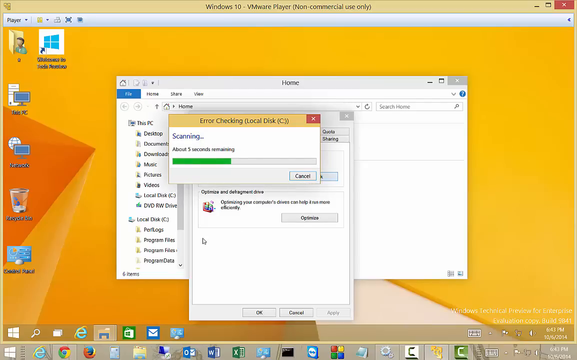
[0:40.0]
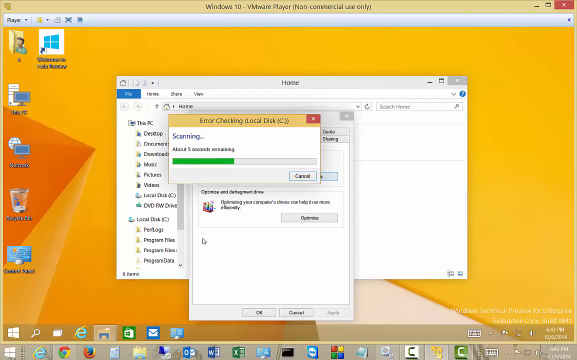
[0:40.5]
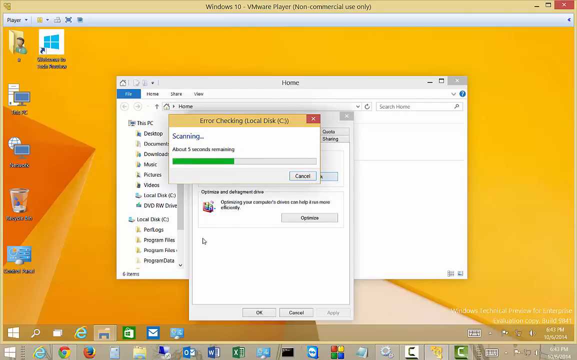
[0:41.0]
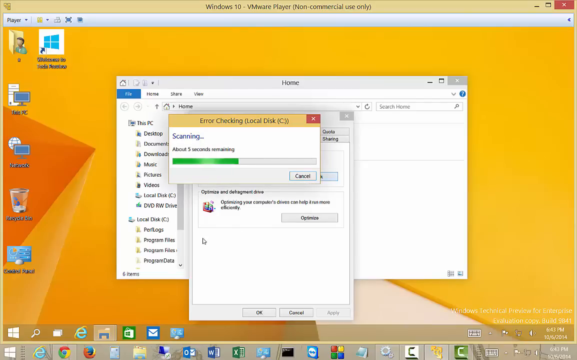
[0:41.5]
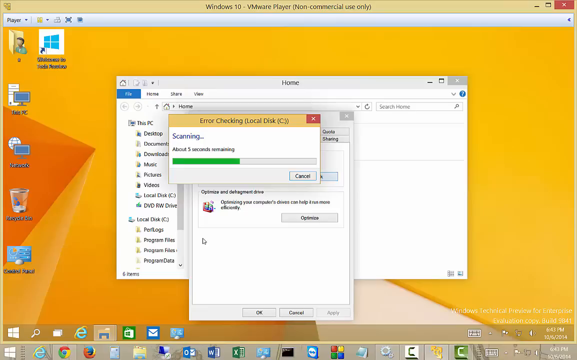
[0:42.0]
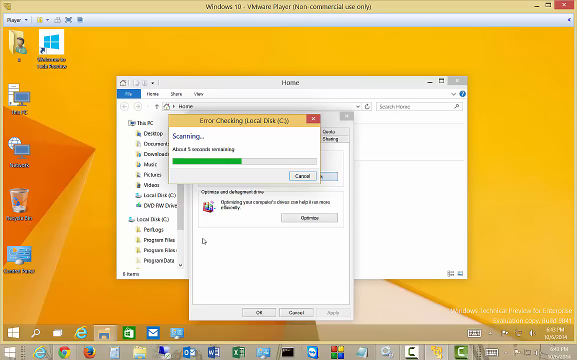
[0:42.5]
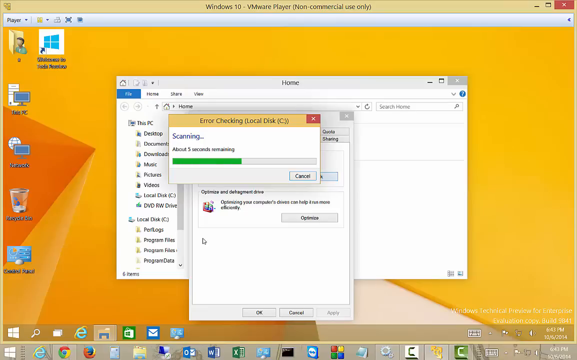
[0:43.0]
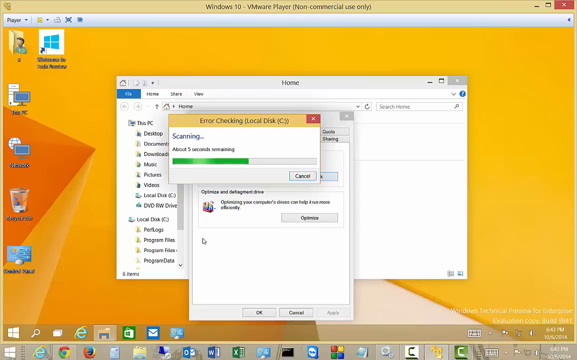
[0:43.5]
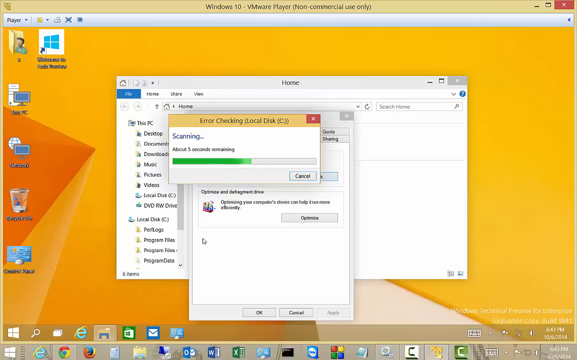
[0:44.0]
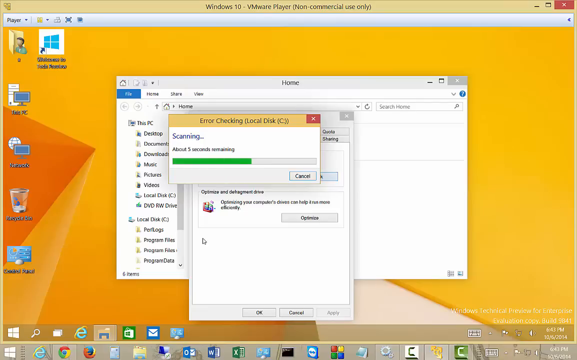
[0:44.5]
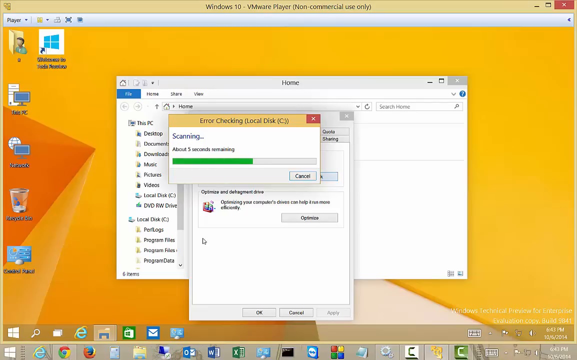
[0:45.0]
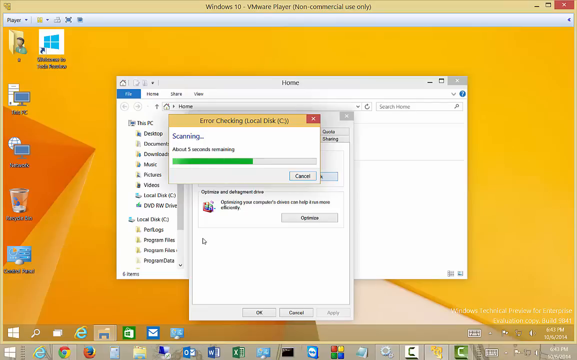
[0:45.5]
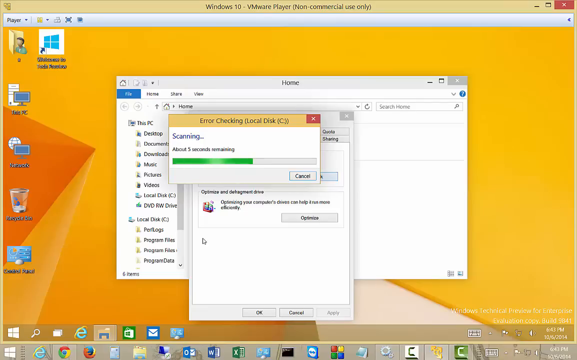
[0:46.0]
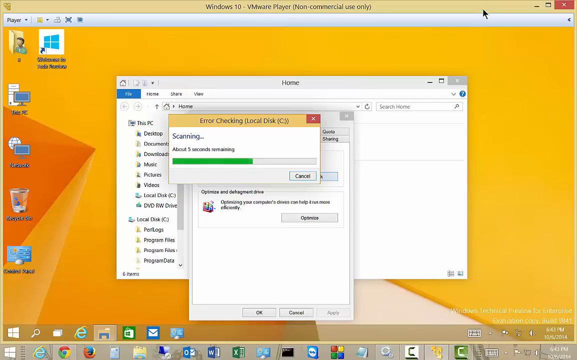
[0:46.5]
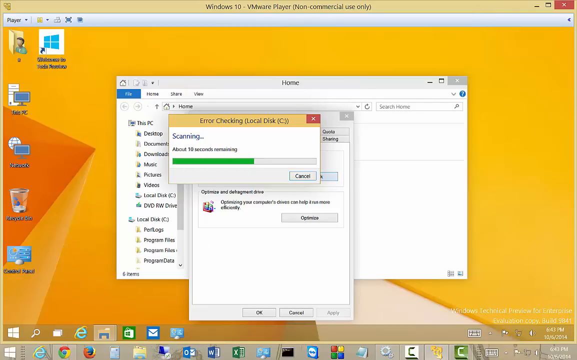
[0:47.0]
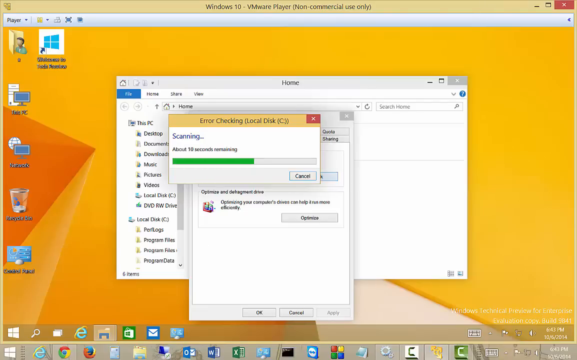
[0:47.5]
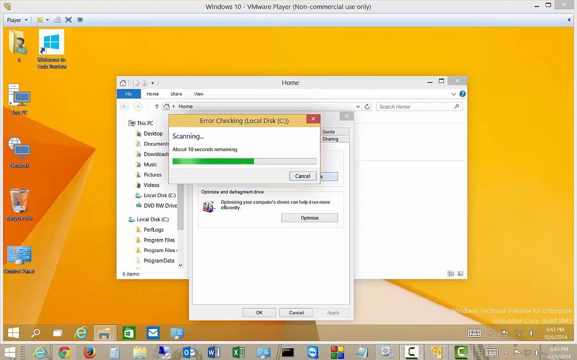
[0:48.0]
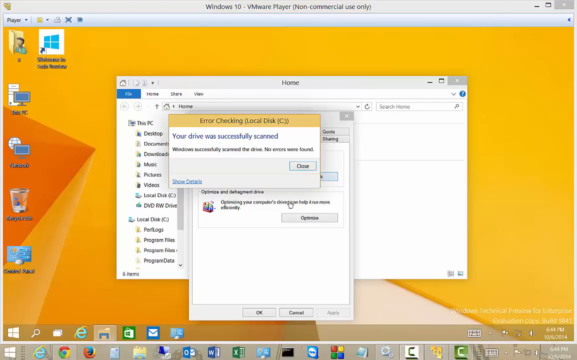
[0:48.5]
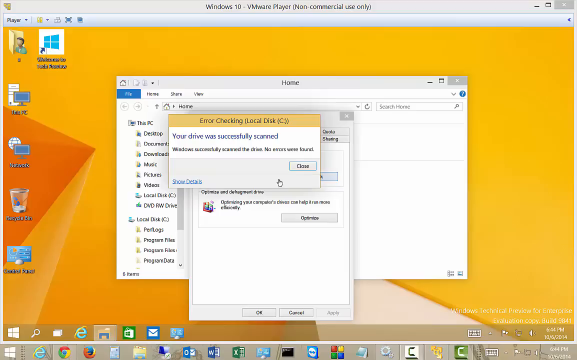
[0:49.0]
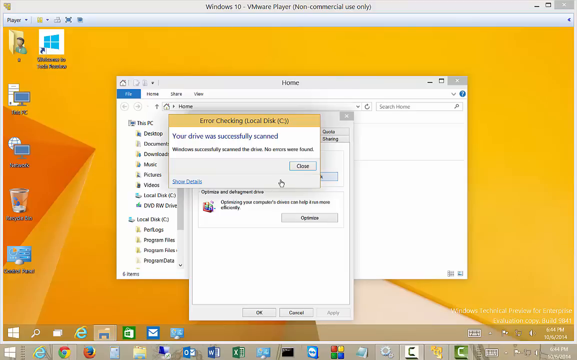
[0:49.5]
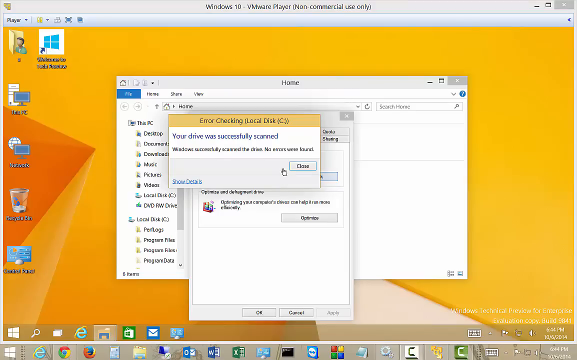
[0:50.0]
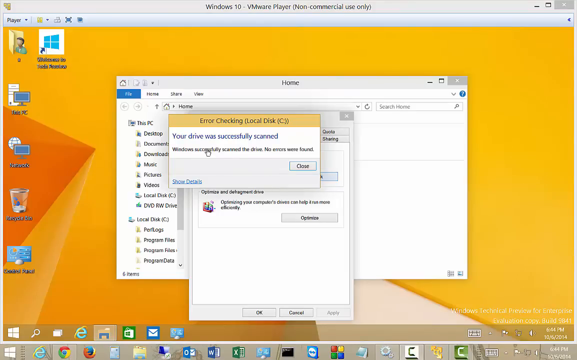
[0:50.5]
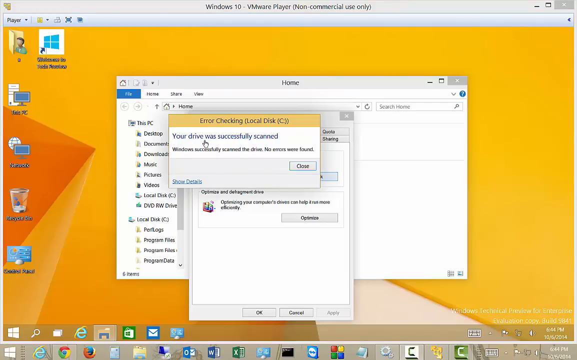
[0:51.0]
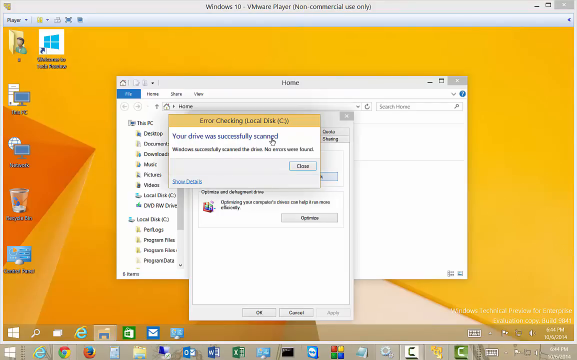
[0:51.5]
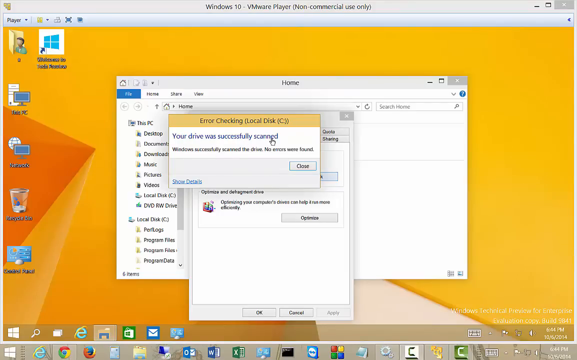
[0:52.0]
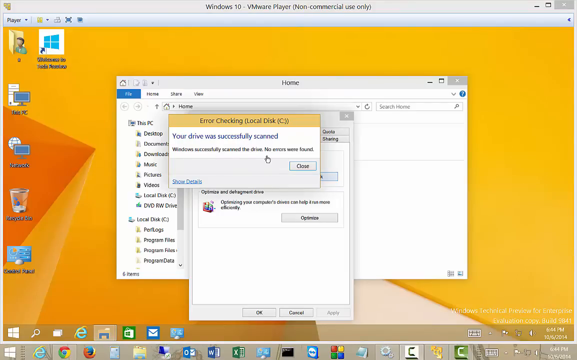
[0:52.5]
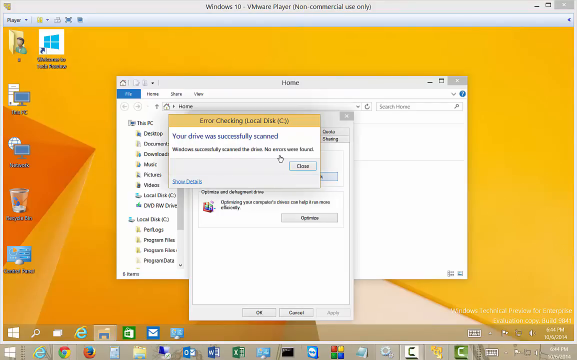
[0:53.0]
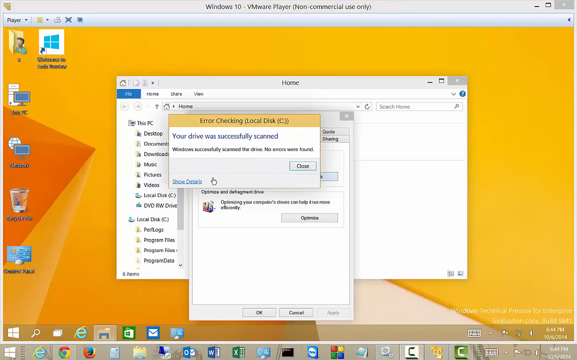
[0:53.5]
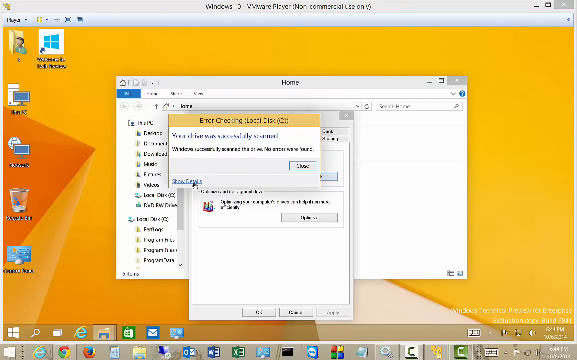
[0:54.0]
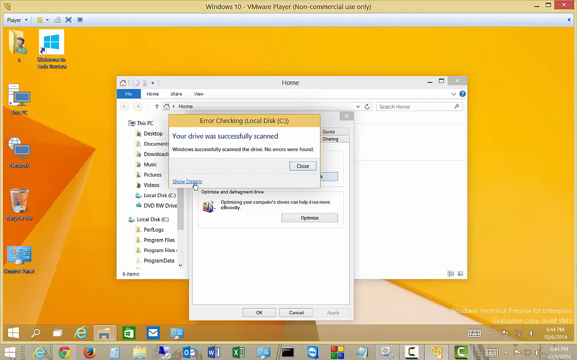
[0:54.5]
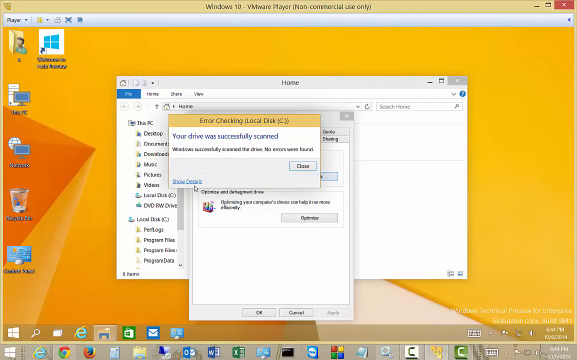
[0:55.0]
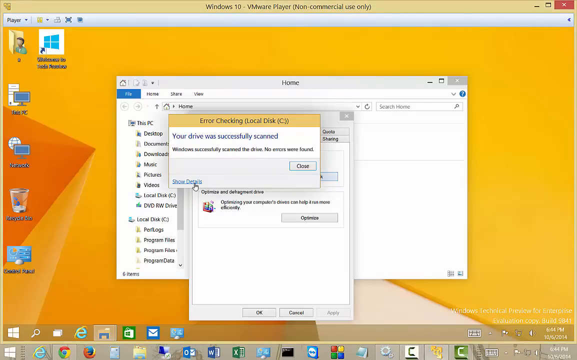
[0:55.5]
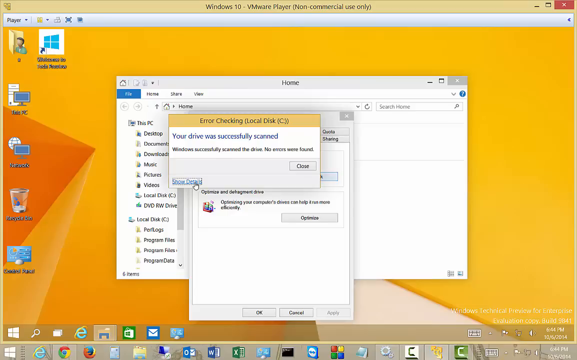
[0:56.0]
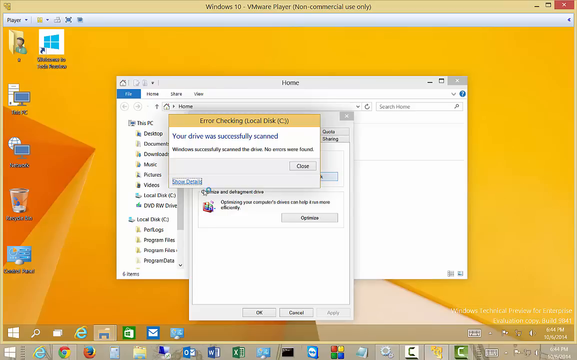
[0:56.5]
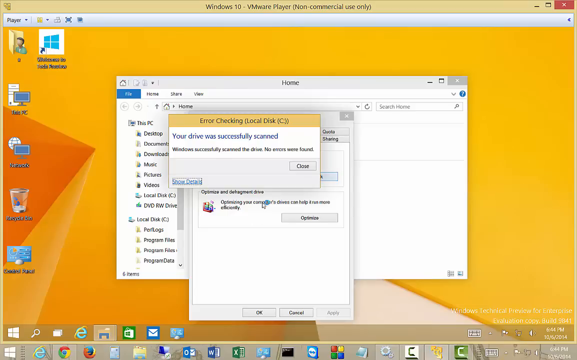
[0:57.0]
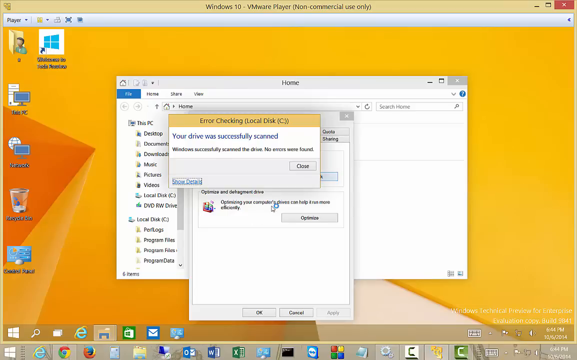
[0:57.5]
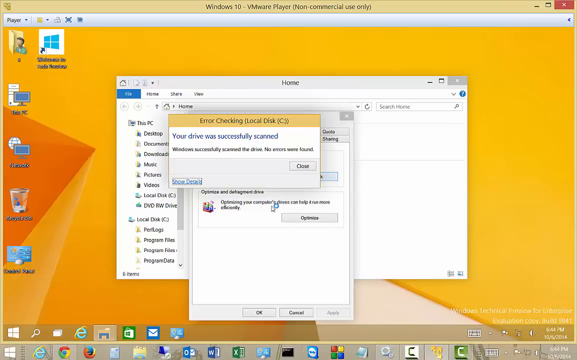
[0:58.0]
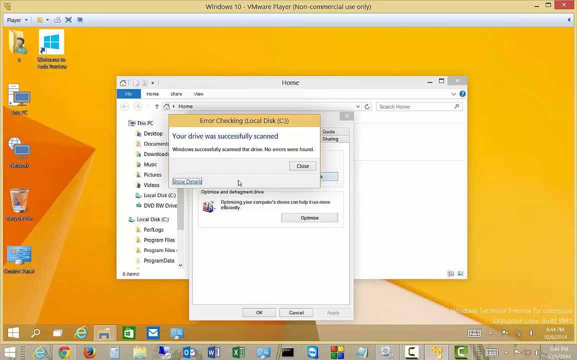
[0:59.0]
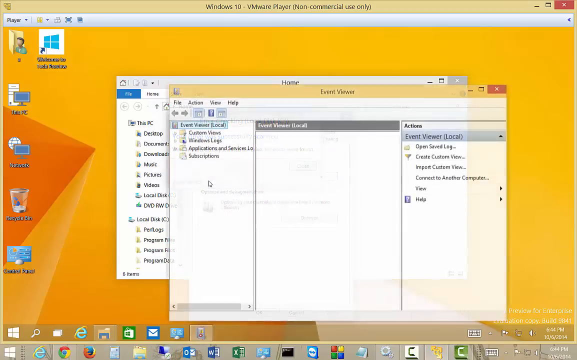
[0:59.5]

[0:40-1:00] A yellow screen, apparently a Windows PC background, has six icons on the left, including "your PC", the recycle bin and one with the Microsoft icon. In the middle, what looks like three separate windows are open on top of each other, and it appears to be scanning. The foremost window says "error checking" and then "scanning," with a loading bar at the bottom that advances. The mouse moves up and another window pops up that says "your drive was successfully scanned," and the mouse points to that message. The pointer then hovers around Show details and, after a moment, opens another screen that shows more details.